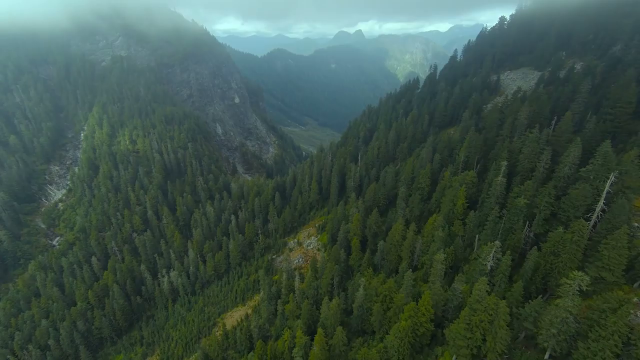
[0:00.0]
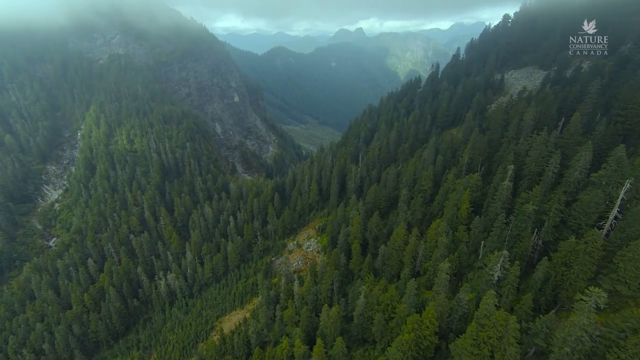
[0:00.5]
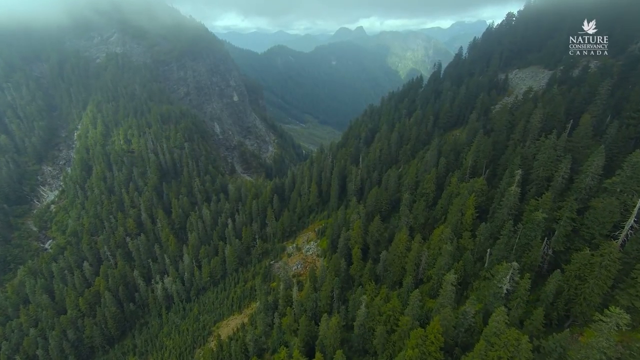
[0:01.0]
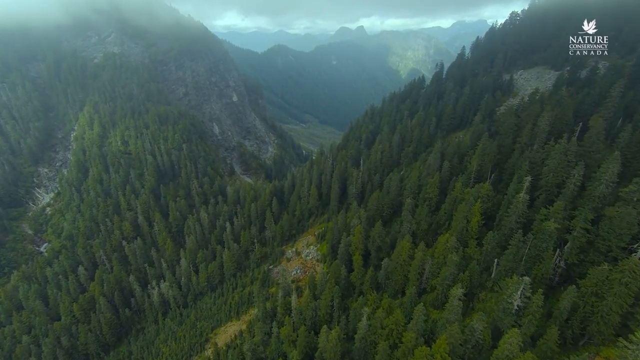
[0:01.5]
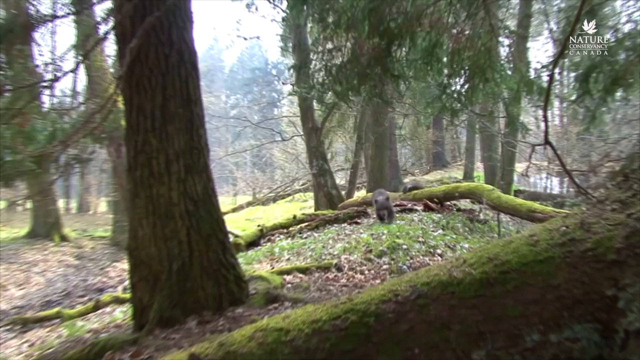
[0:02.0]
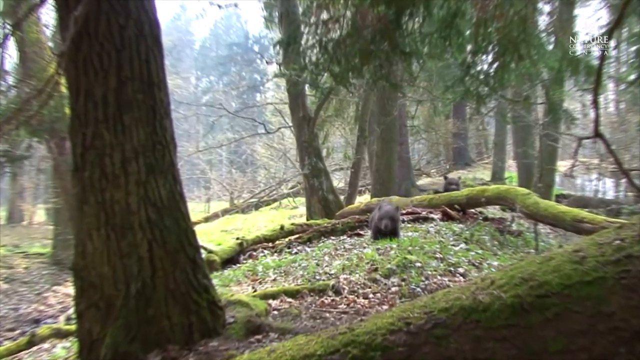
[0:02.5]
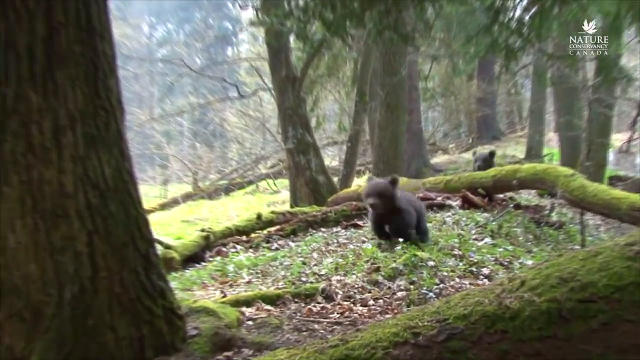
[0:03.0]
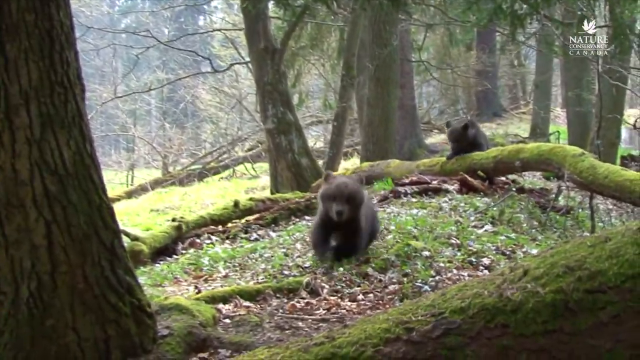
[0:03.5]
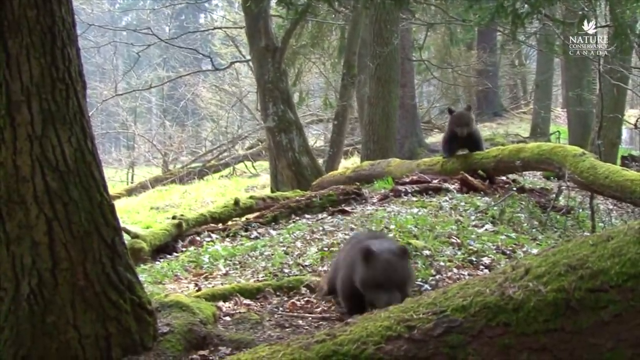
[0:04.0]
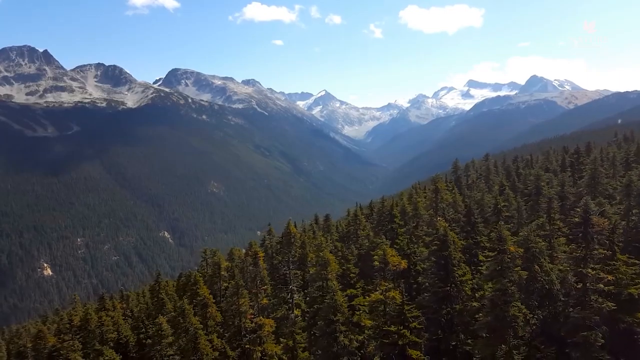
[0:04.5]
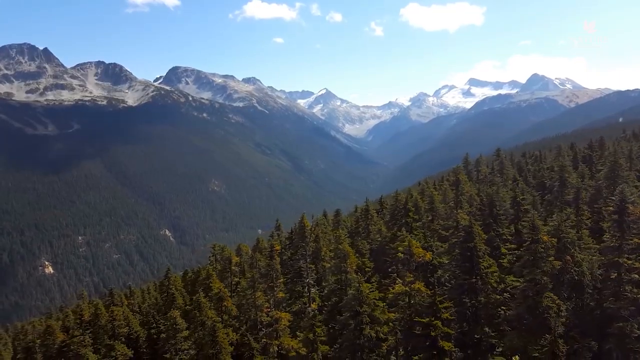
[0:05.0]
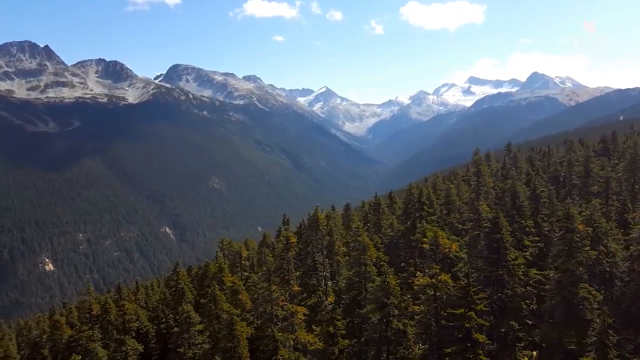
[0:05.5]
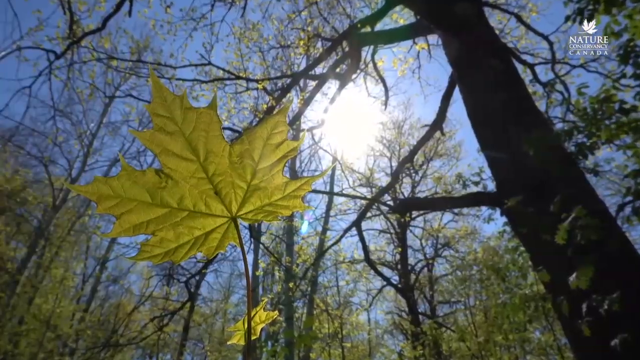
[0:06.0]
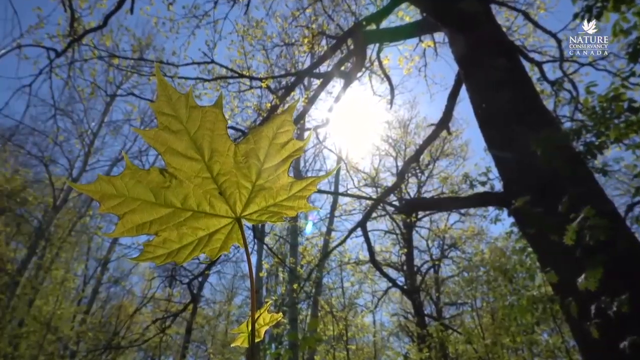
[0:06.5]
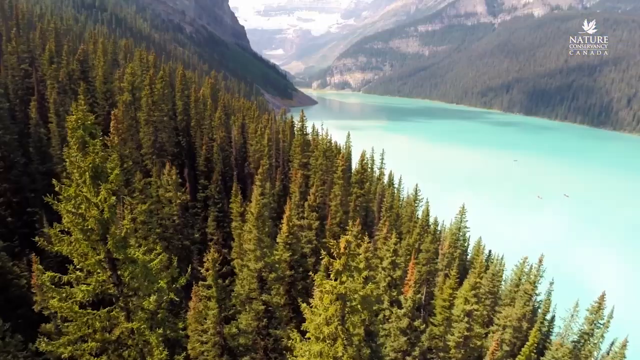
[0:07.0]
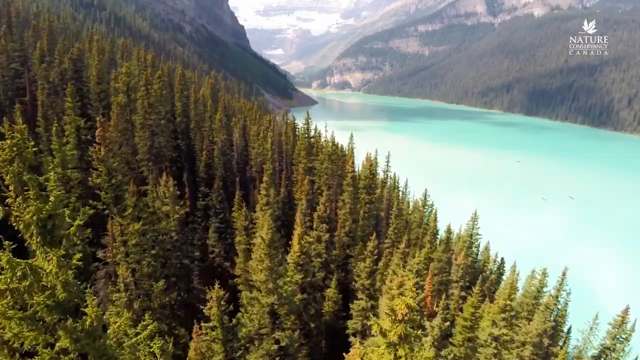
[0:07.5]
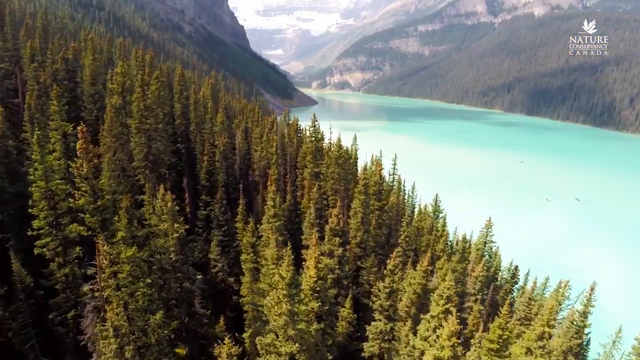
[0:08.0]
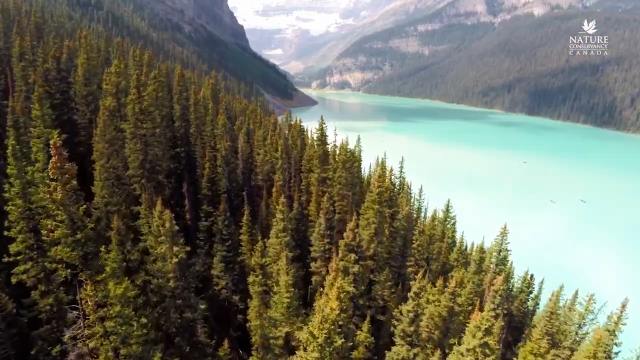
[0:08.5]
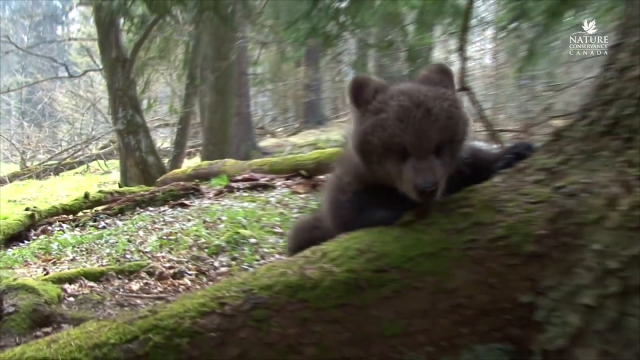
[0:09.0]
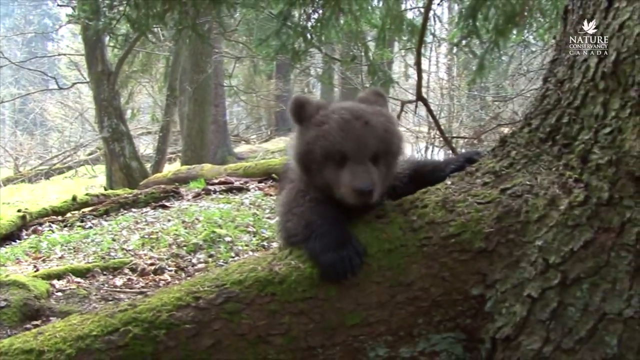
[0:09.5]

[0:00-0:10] An overhead, swooping shot passes over some kind of forest area, with a bunch of mountains visible as the camera goes over pine trees. The video cuts to footage of what look like bear cubs running toward the camera. There are two of them: one in the foreground runs quite quickly, while one in the background seems to struggle to get over a log. Next comes footage of the tops of pine trees moving from right to left, followed by what looks like a view looking up at the sky through trees, with branches and leaves visible and a close image of a yellow leaf on the left side. The video cuts back to more overhead footage of pine trees, with crystal blue water on the right side that looks like possibly a lake or a river. It then cuts to a close shot of the bears.